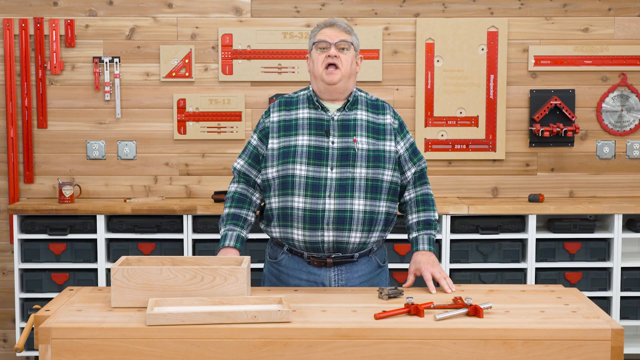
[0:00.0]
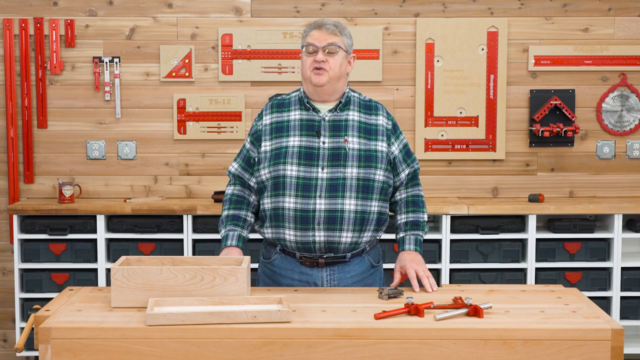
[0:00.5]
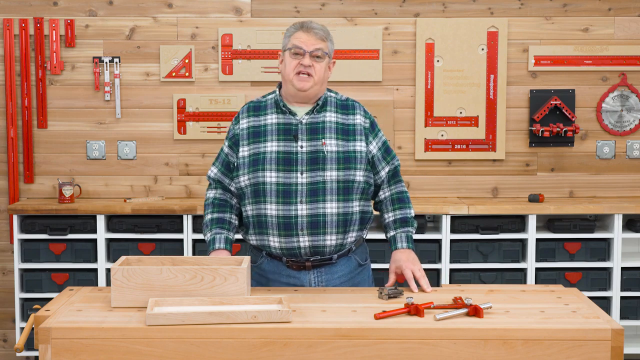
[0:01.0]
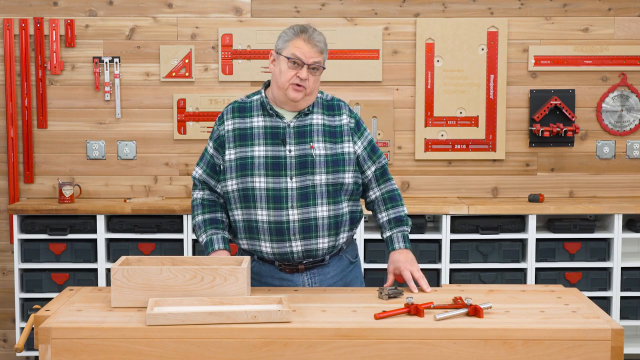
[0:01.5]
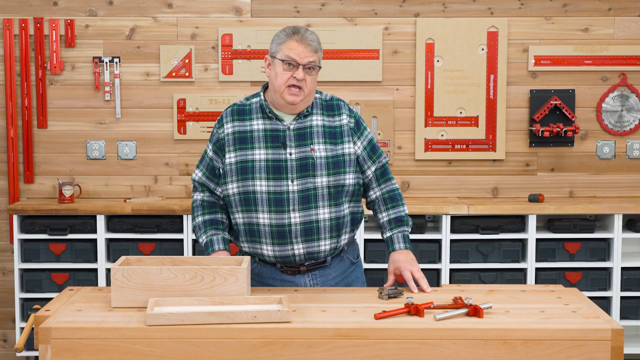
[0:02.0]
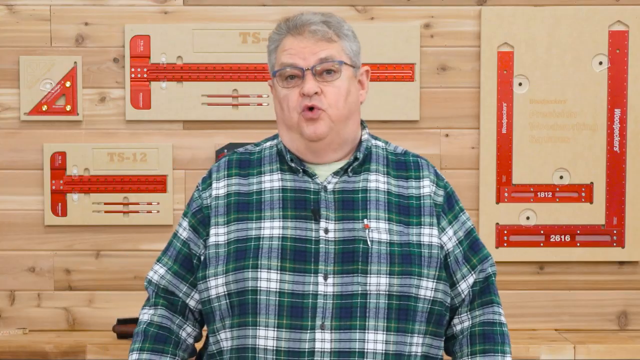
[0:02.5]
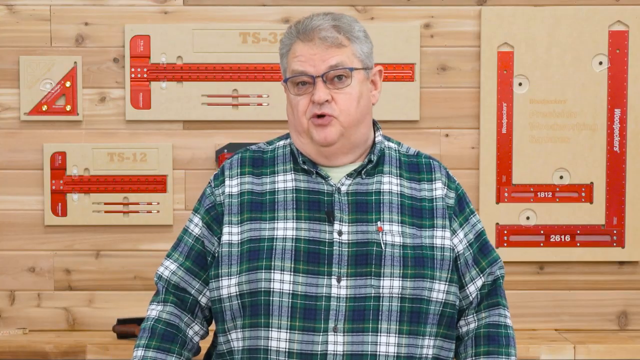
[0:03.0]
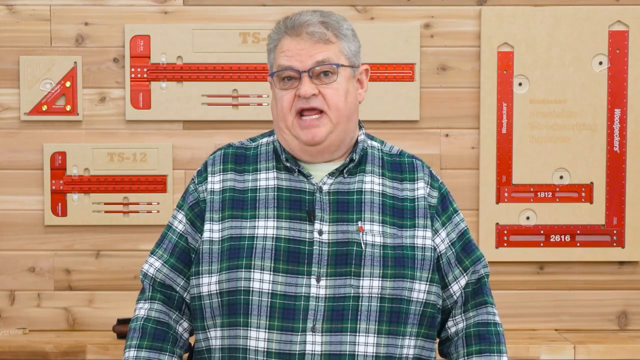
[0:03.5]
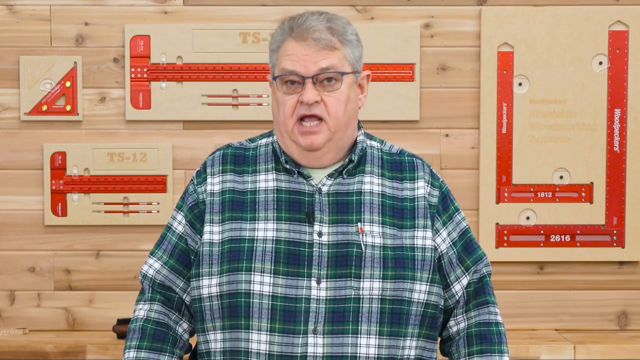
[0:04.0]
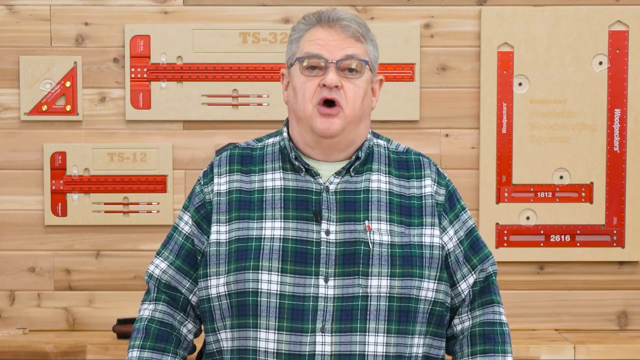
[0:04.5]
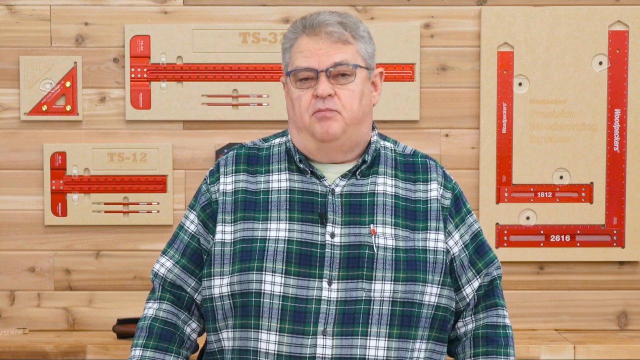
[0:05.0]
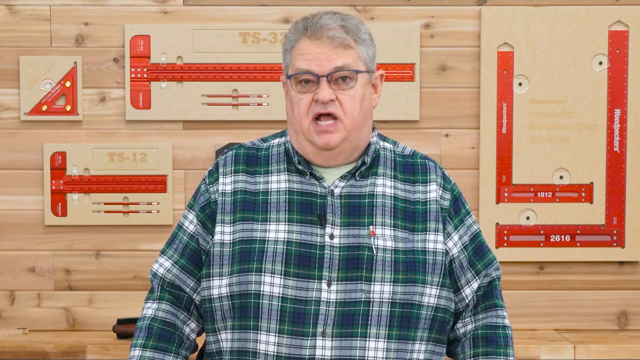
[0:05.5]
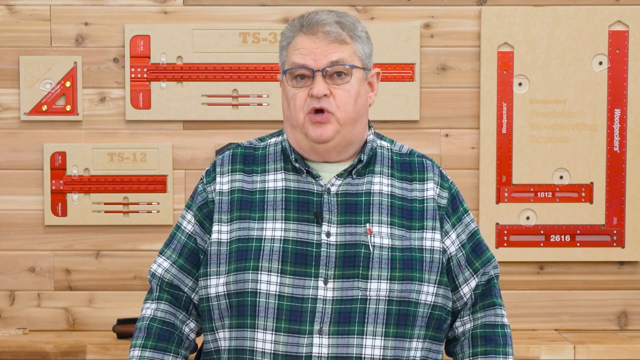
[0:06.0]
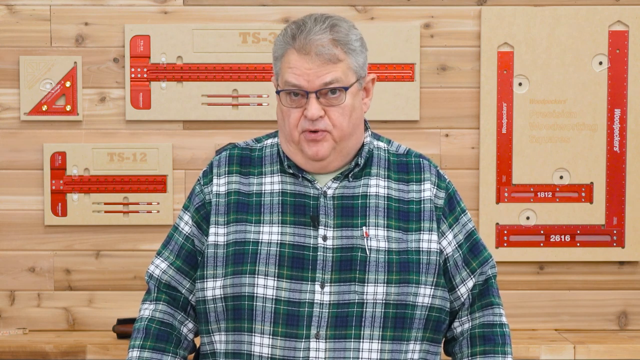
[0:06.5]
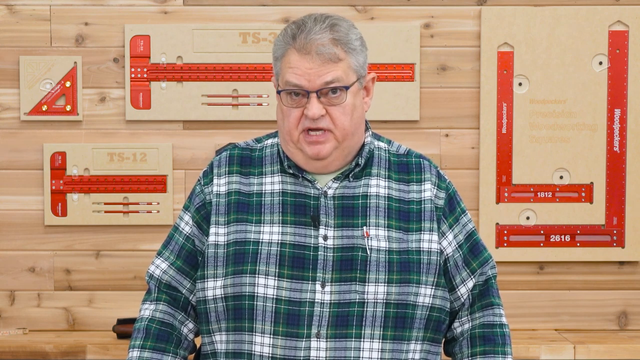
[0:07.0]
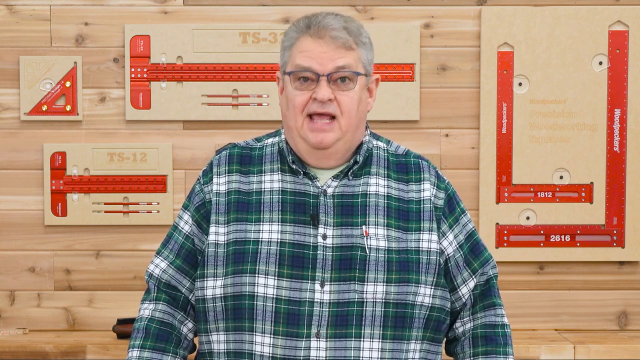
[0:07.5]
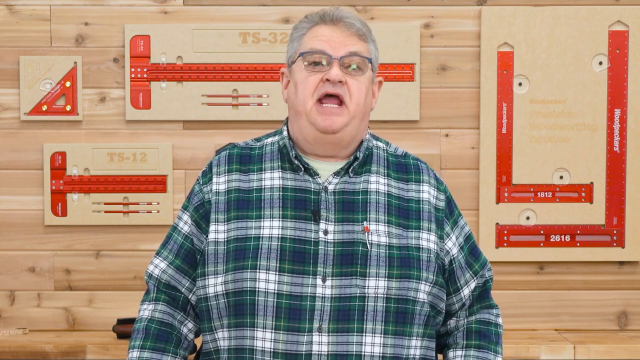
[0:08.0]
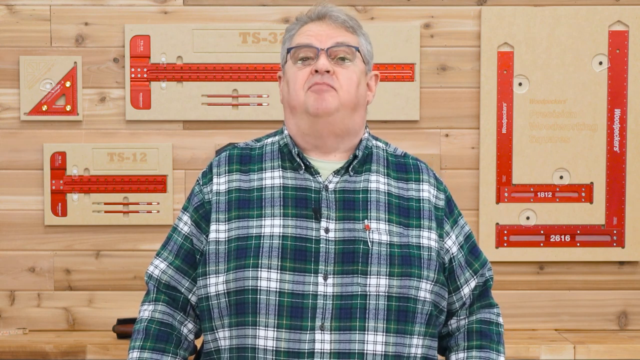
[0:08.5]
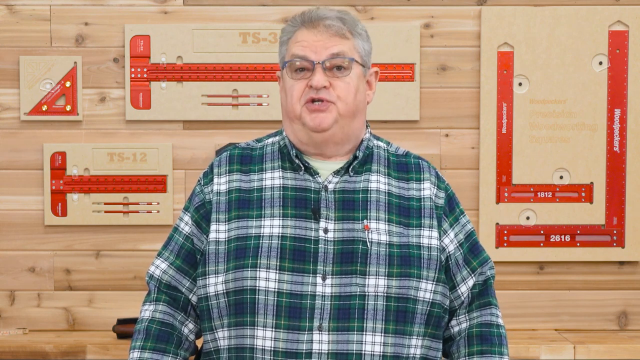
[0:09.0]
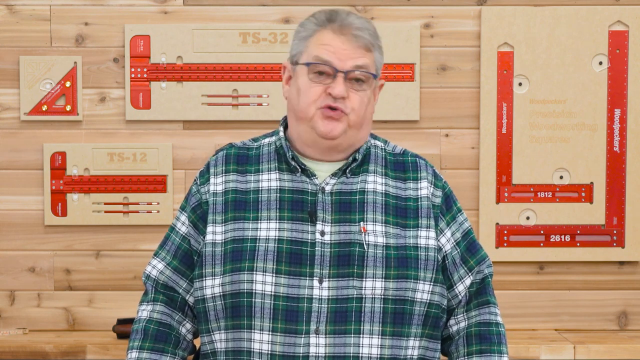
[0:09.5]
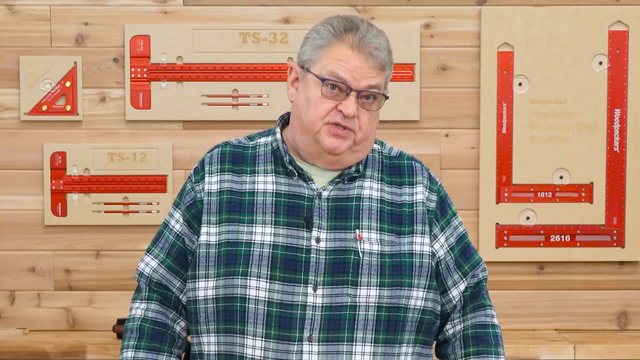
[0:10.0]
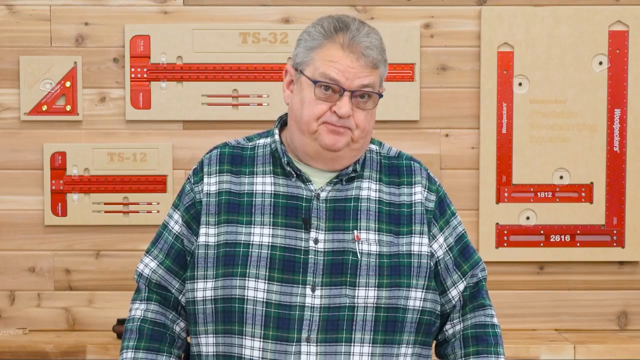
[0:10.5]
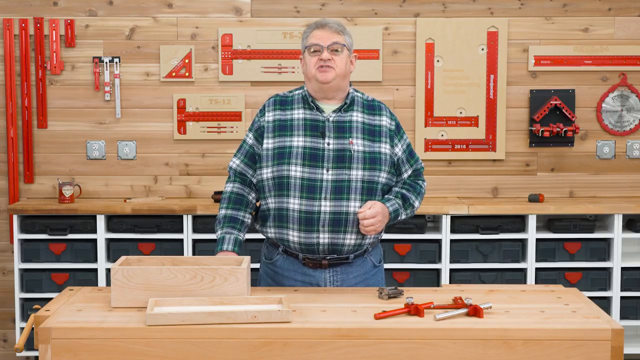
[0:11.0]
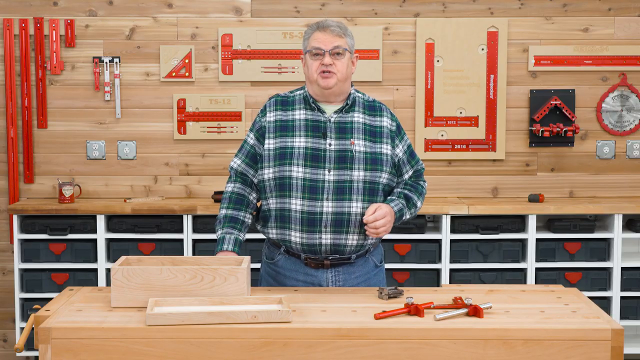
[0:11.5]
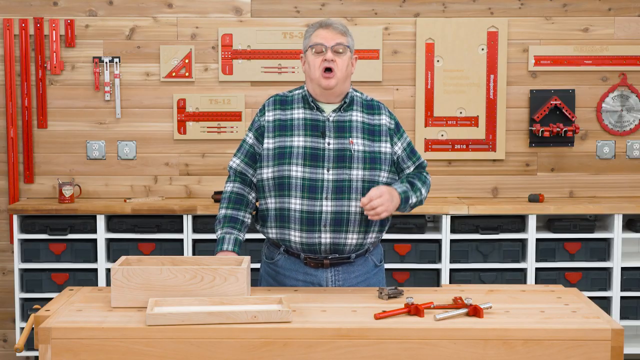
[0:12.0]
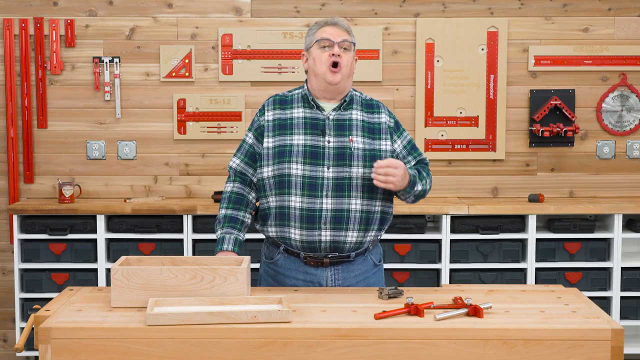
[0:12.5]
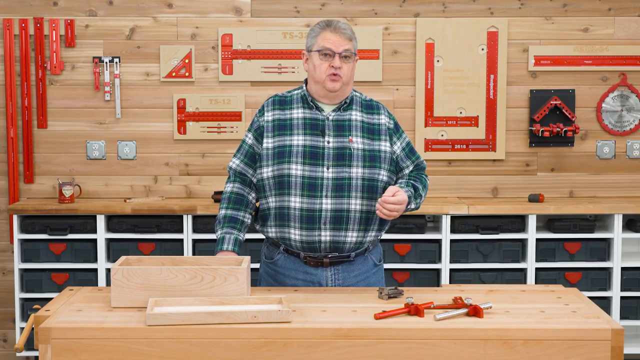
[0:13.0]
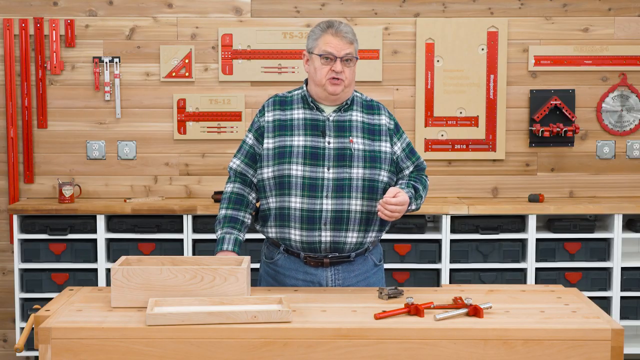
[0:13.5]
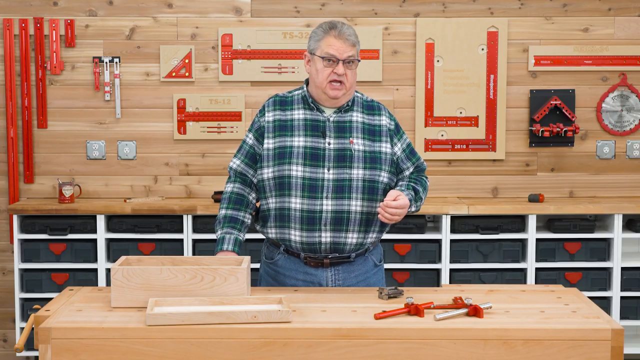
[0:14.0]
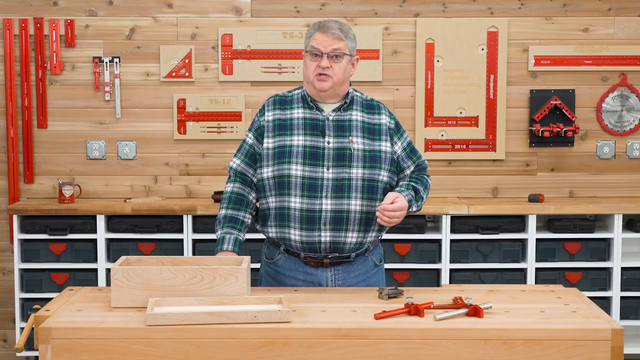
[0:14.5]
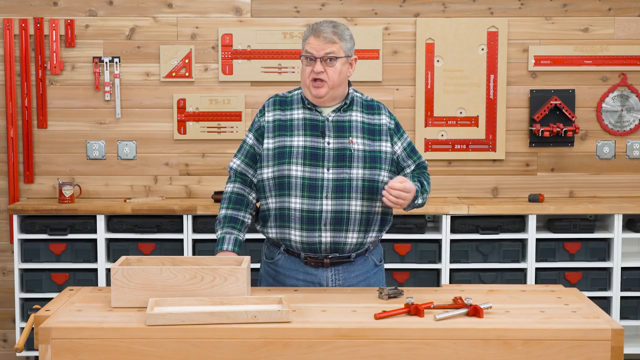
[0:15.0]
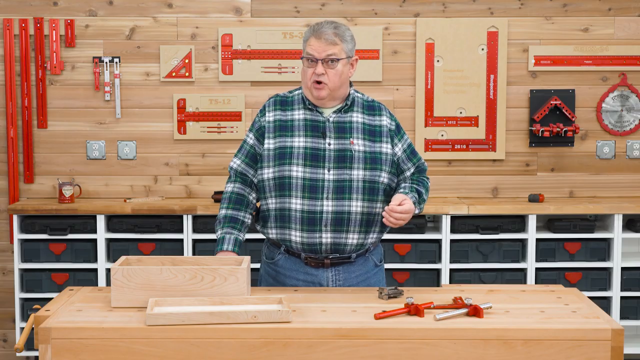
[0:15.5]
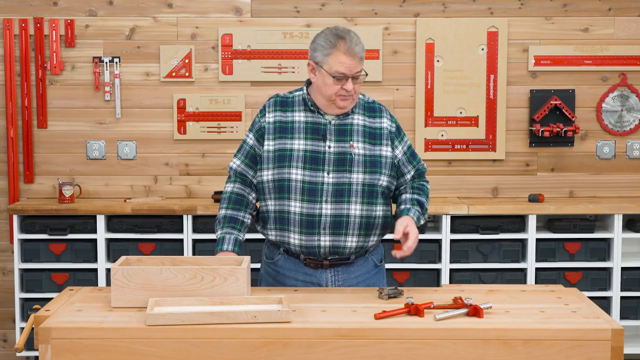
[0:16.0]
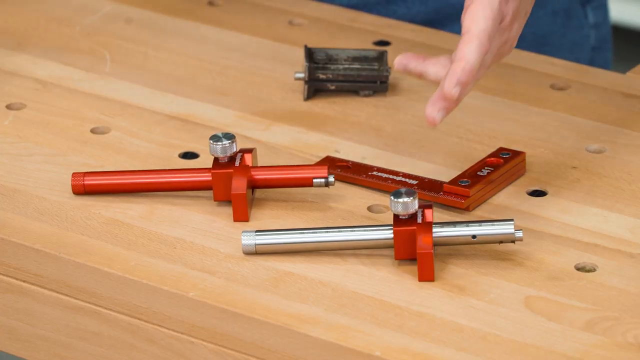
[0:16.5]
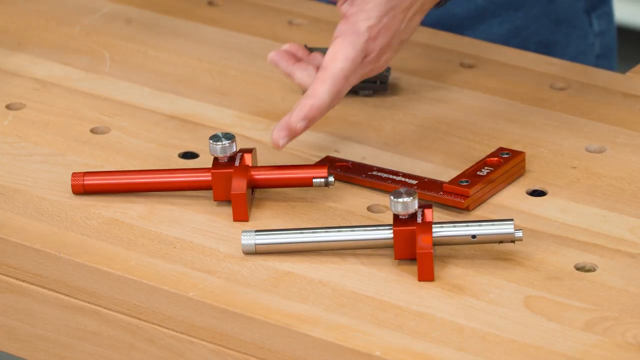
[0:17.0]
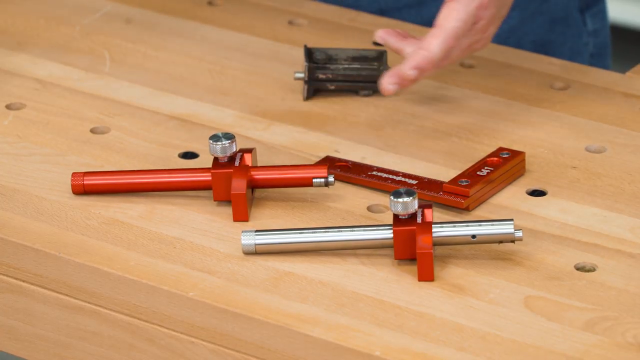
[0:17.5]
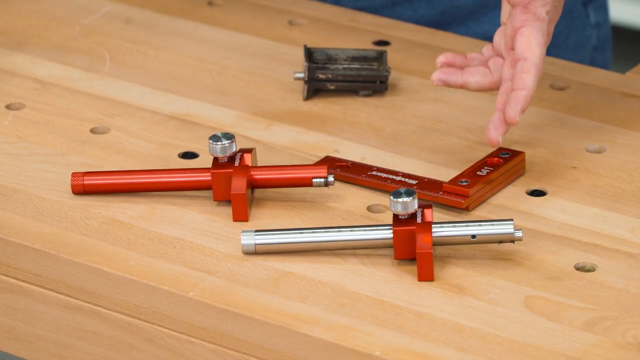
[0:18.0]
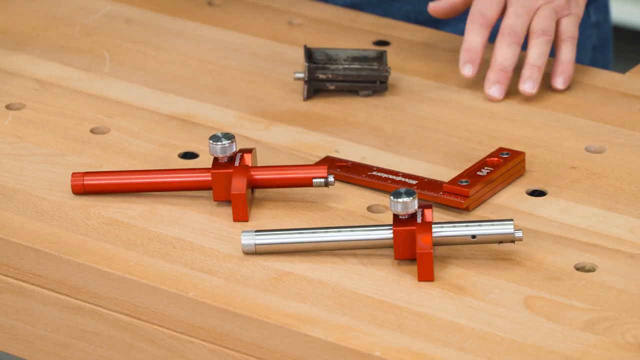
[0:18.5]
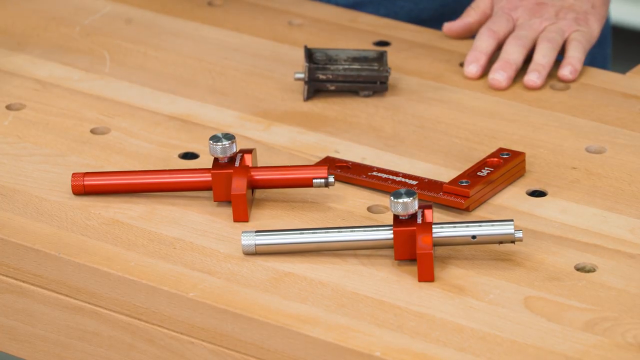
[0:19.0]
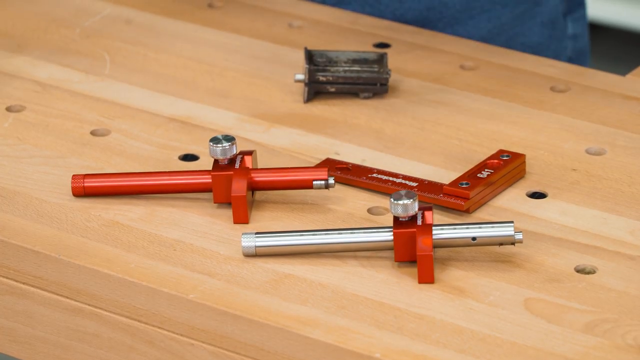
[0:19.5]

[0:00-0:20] In what appears to be a DIY or how-to video, a portly man wears a green and blue plaid shirt with white coming through it, the kind of plaid a highland dancer would wear. His neck is basically not visible. The wall behind him is made of wood and holds a lot of tools, such as T-squares. He has a workbench in front of him, and on it is a wooden box with a wooden lid. There are also two tools that at first look like pipe wrenches but are not; they are stainless steel, painted red in spots. Something else is on the workbench that cannot be identified, possibly some kind of gauge, and a type of square is also visible.